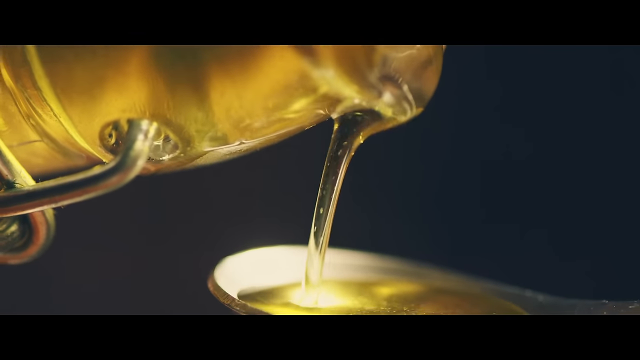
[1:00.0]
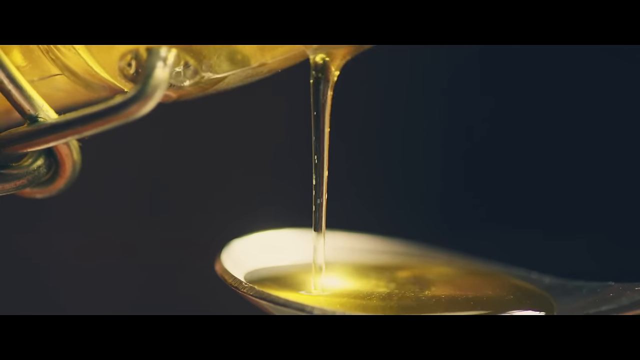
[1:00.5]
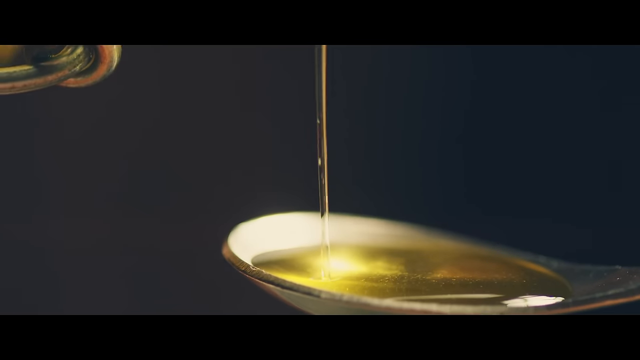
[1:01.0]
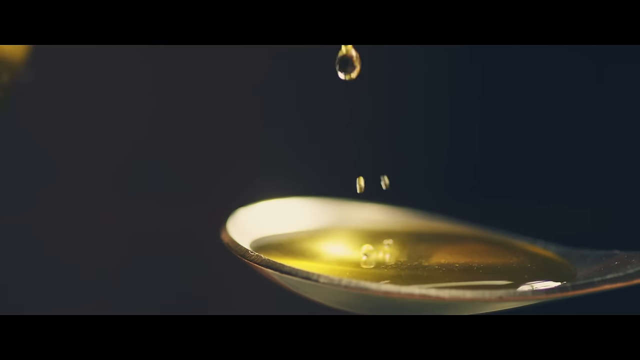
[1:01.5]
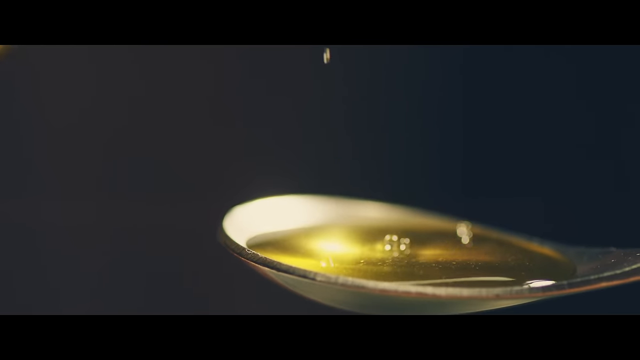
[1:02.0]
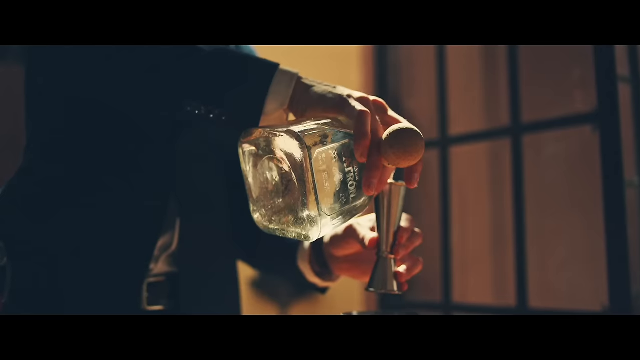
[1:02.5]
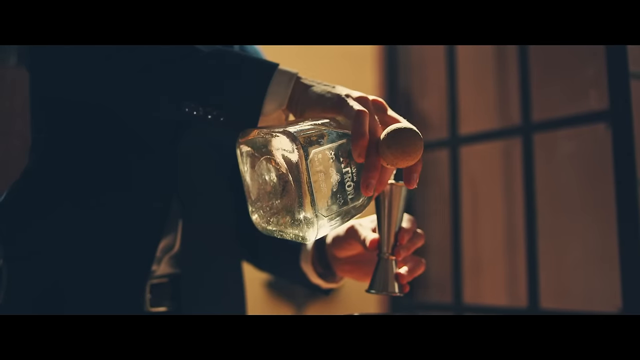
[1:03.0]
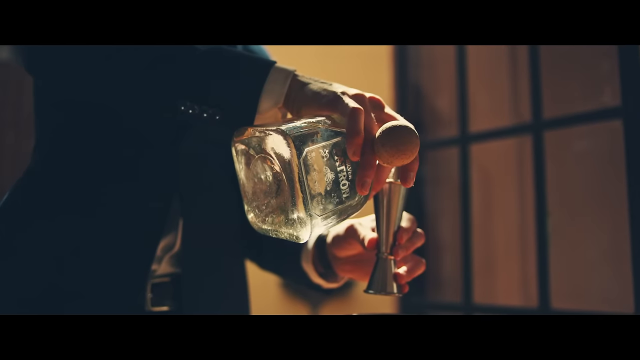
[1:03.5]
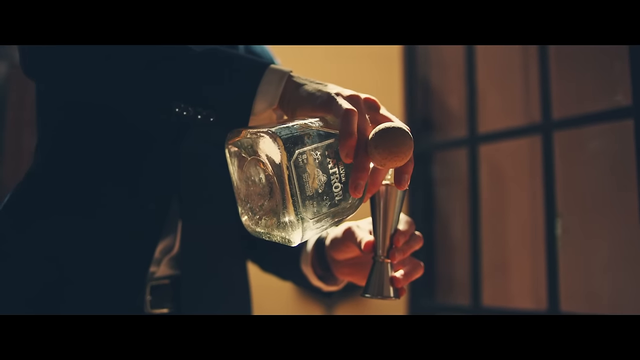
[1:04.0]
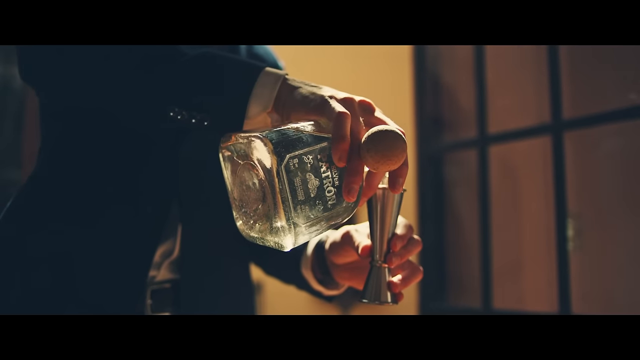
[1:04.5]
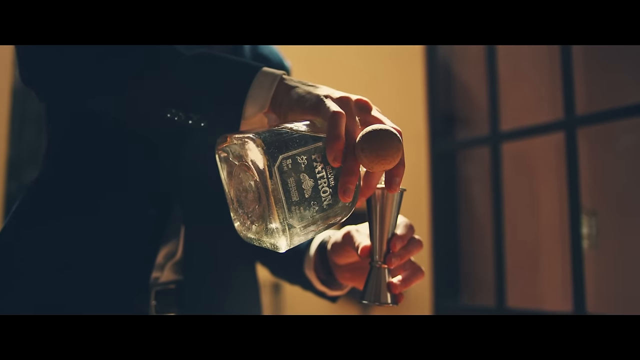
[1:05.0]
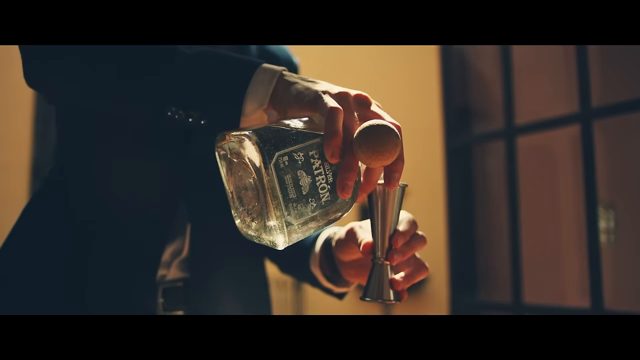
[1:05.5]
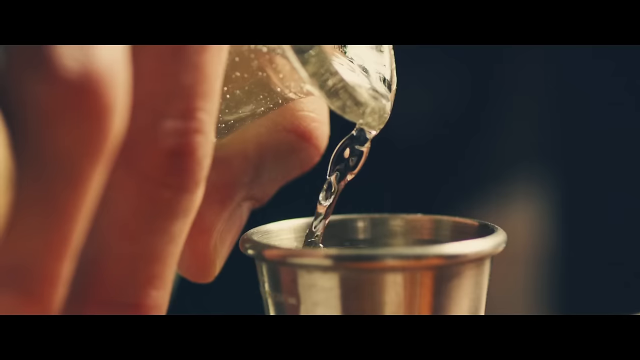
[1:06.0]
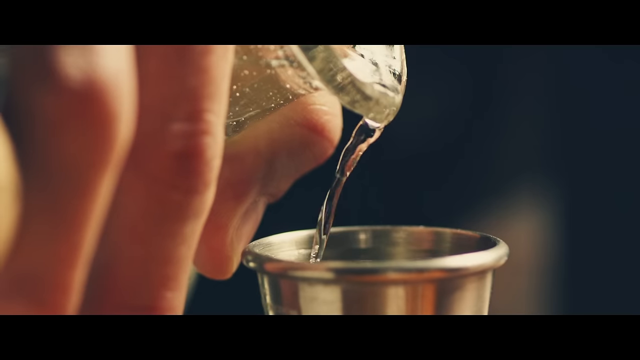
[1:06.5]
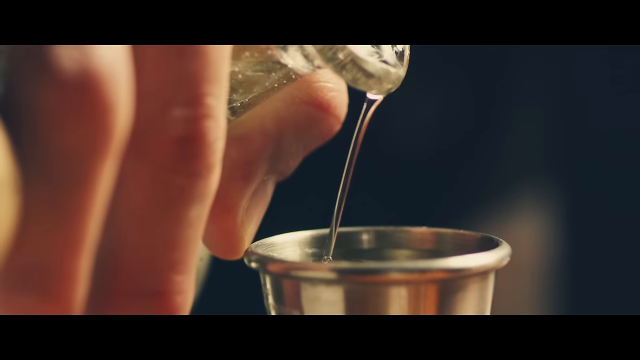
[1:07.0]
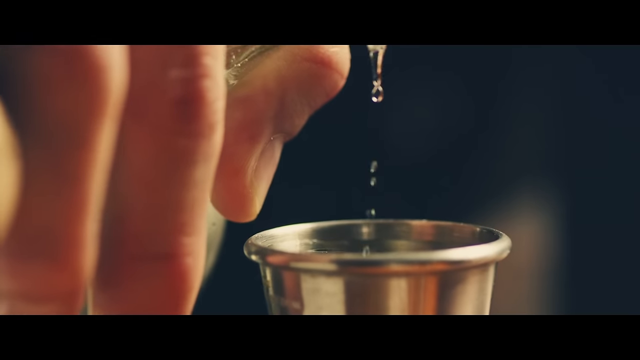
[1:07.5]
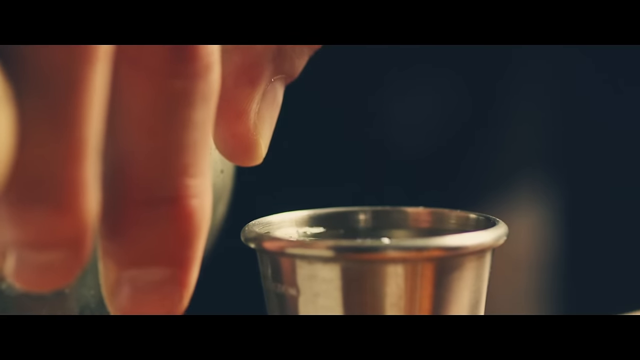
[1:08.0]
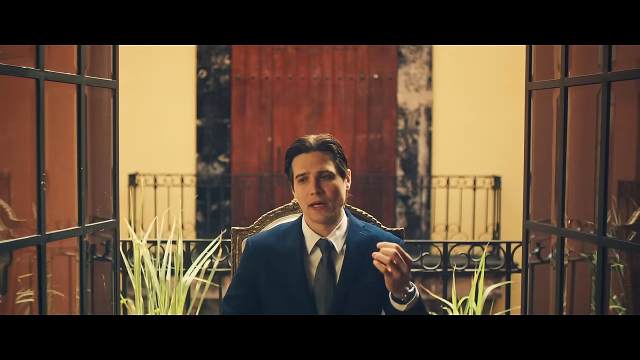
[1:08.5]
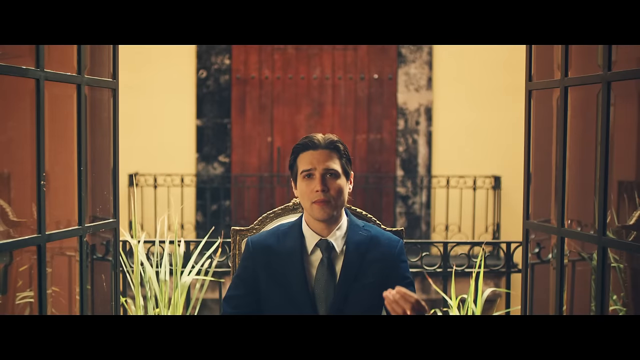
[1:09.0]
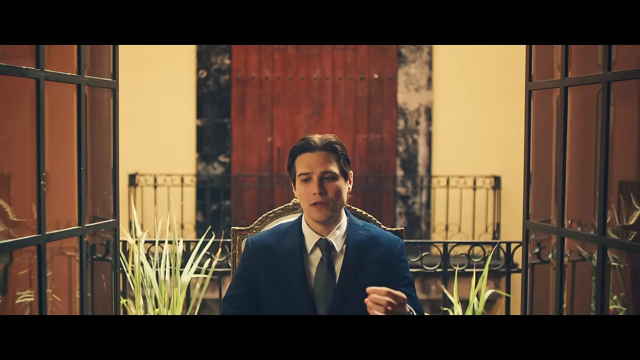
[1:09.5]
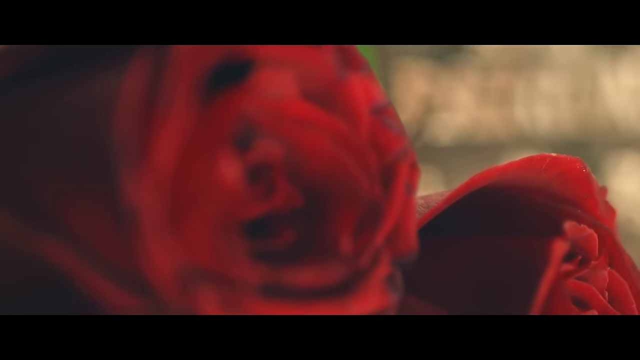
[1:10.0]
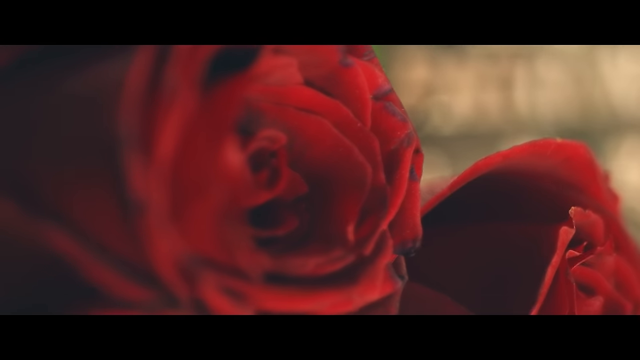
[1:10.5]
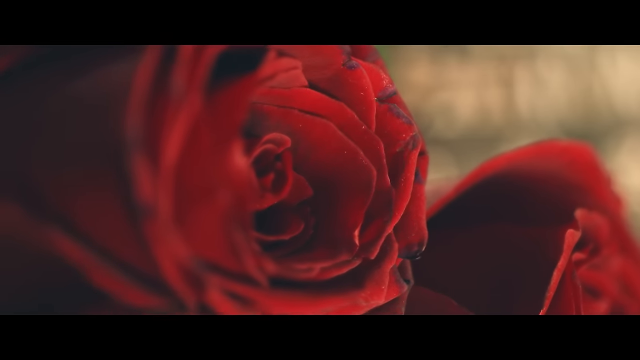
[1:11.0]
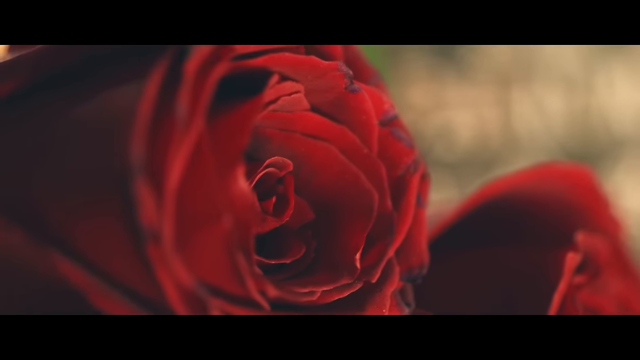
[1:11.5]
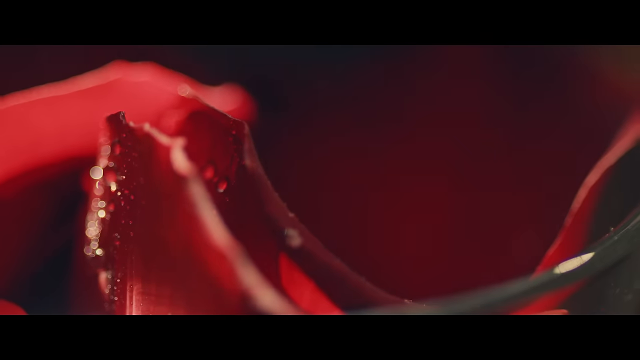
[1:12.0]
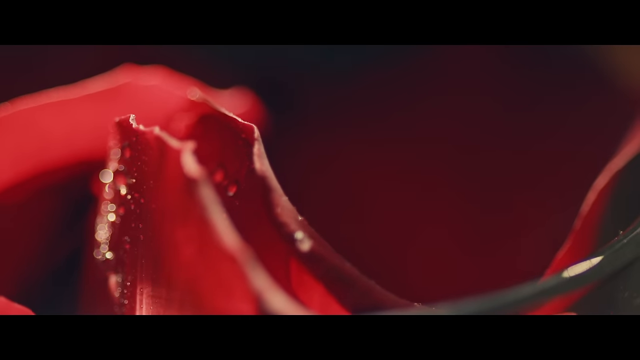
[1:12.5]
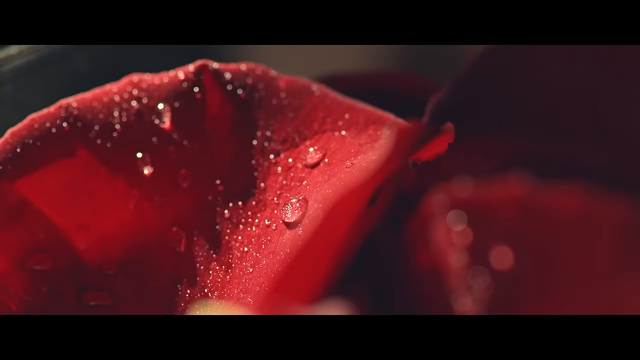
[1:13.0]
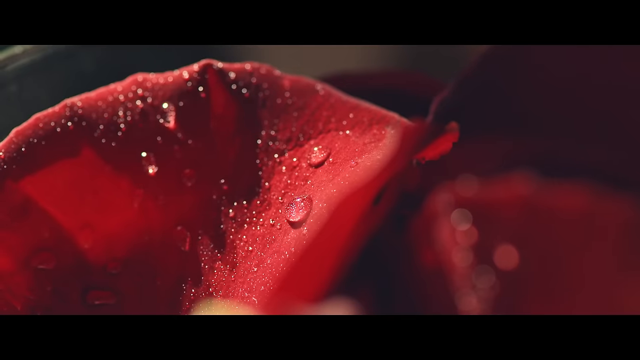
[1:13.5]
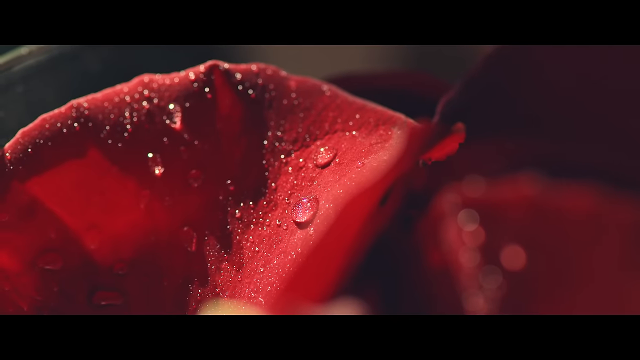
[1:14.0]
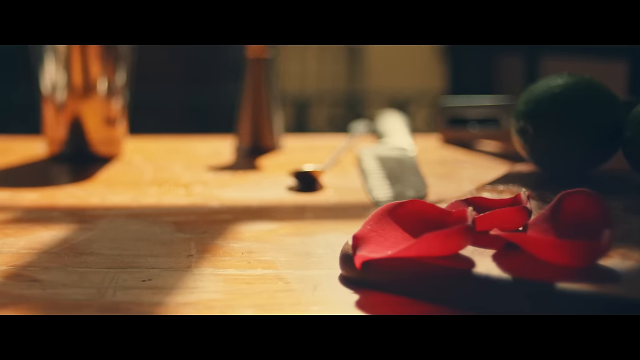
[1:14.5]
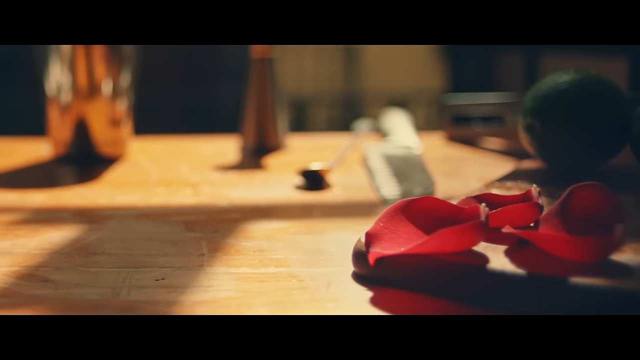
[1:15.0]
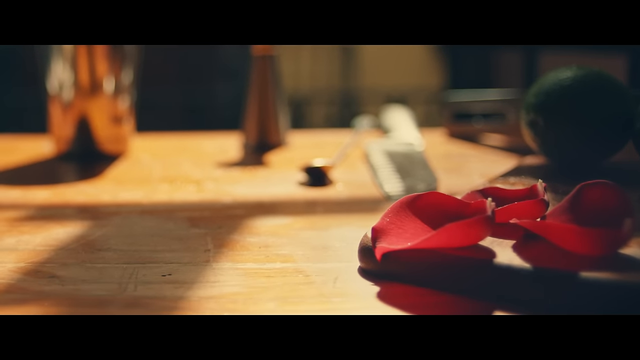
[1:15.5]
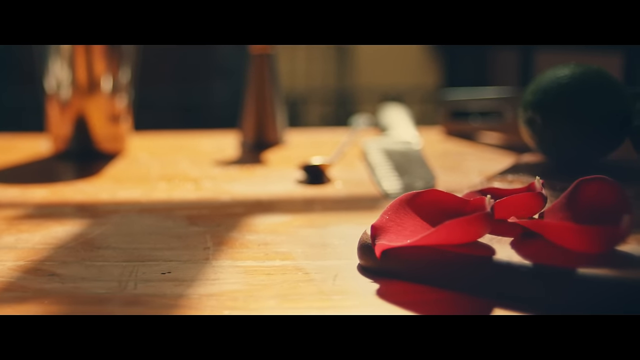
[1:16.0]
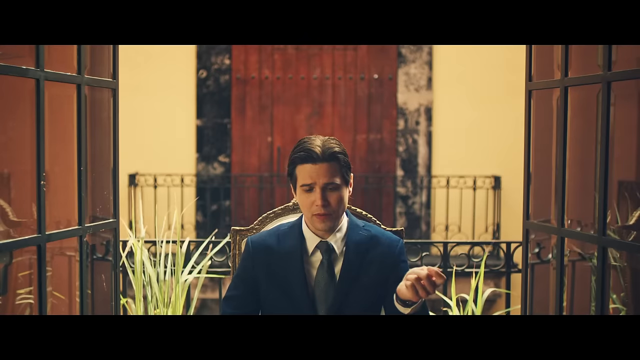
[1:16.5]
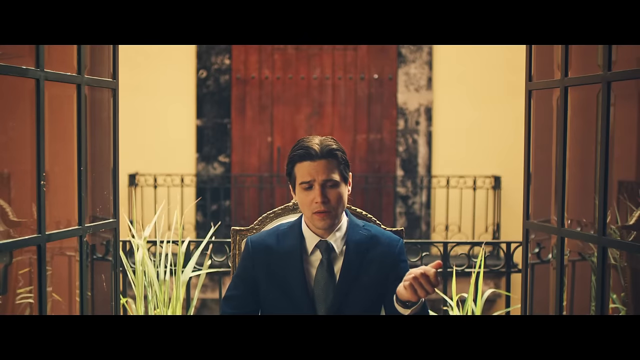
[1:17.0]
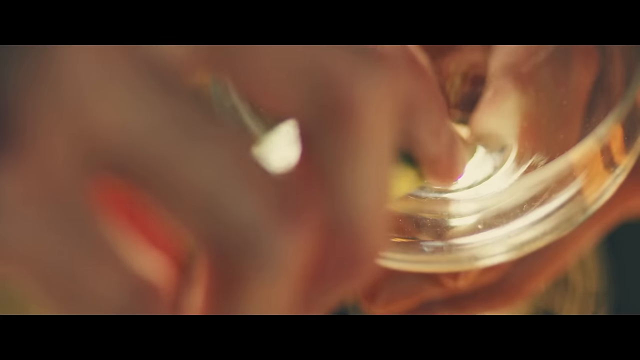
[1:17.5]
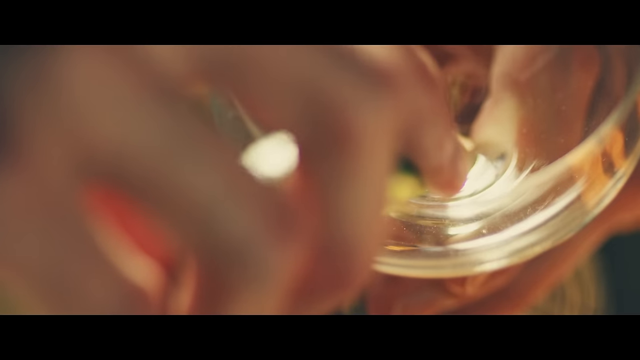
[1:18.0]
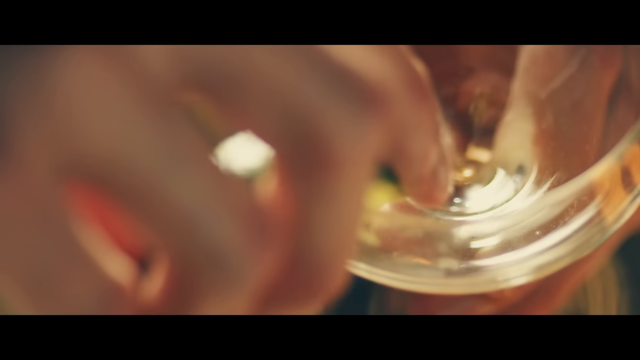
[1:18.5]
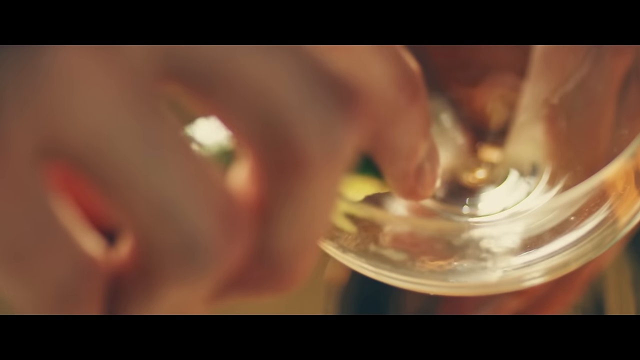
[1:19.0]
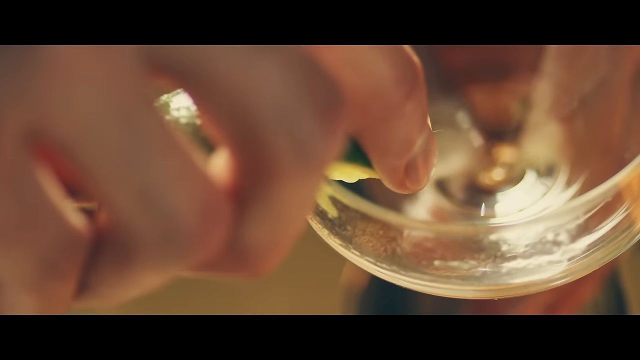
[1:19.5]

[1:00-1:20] The lighting changes, and the background is now completely black while the man pours and creates the drink. Very red roses with dewy leaves surround the table. The simple syrup is in a glass jug with a pop top. The man making the drink is younger, with slicked-back dark brown hair, and wears a dark blue suit with a dark blue tie and a white shirt. He lines the rim of the glass with lime.